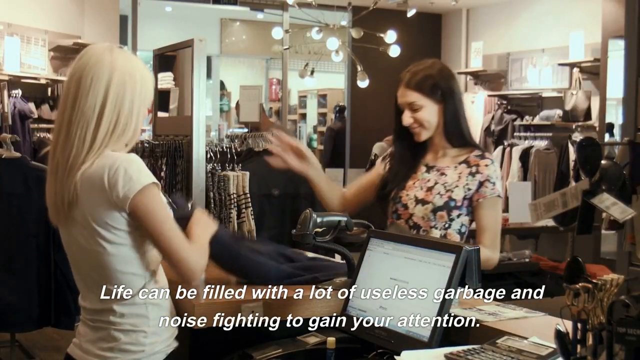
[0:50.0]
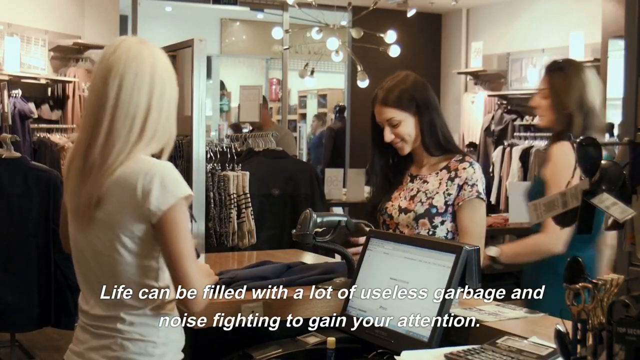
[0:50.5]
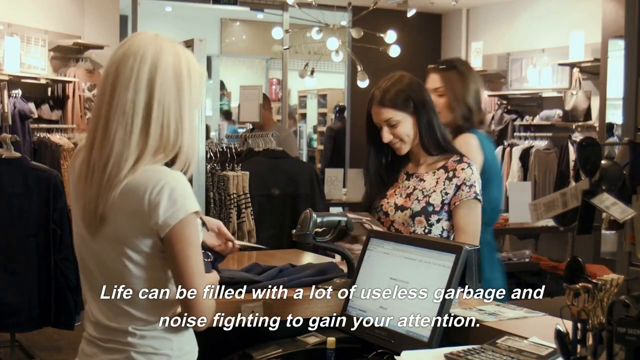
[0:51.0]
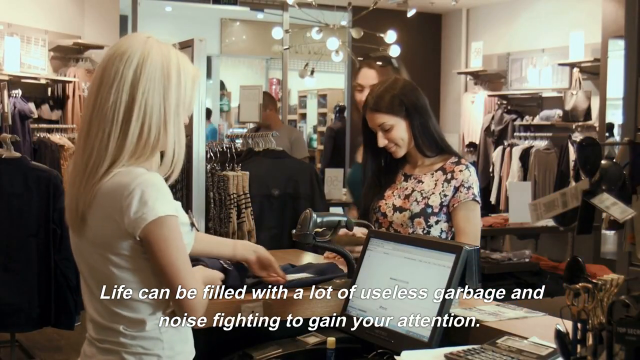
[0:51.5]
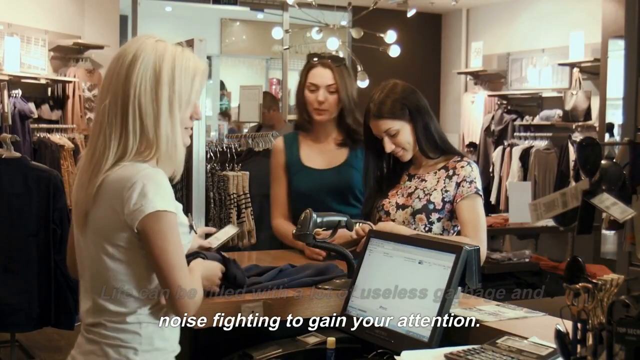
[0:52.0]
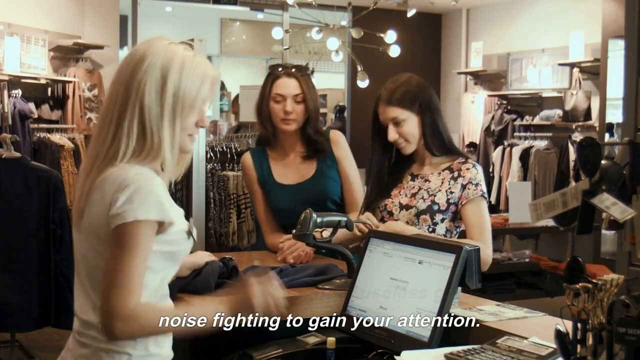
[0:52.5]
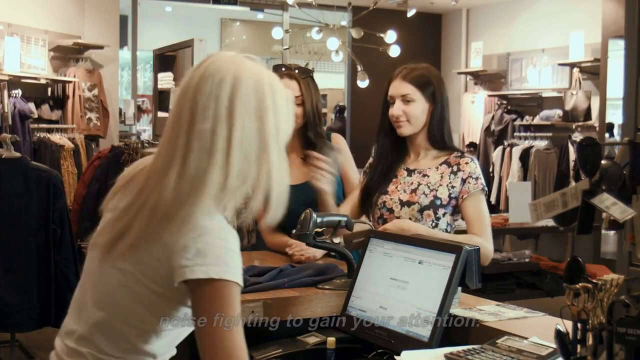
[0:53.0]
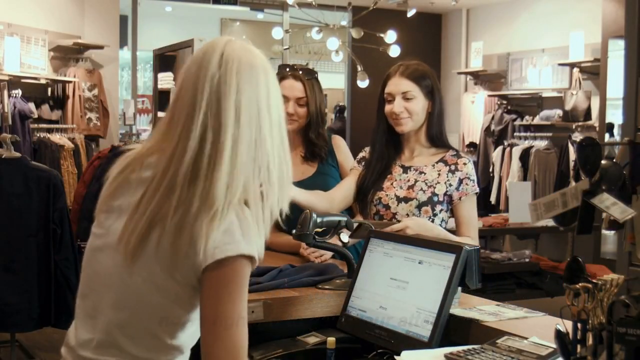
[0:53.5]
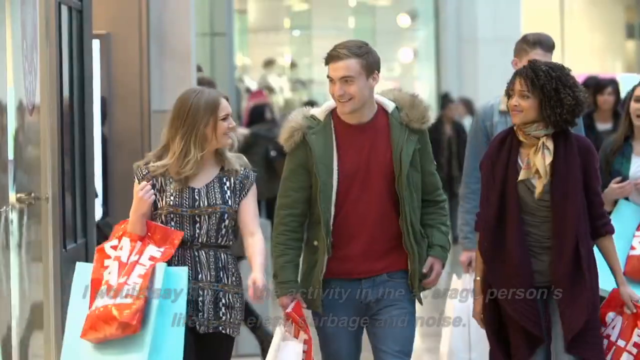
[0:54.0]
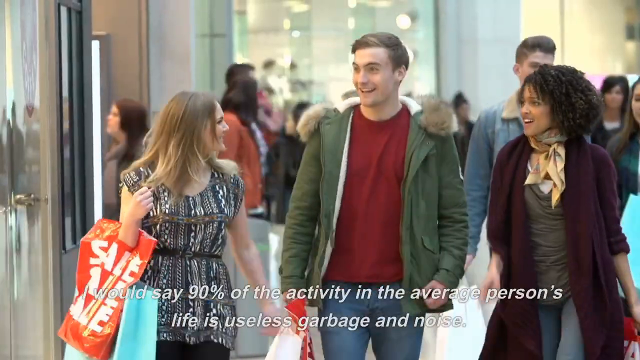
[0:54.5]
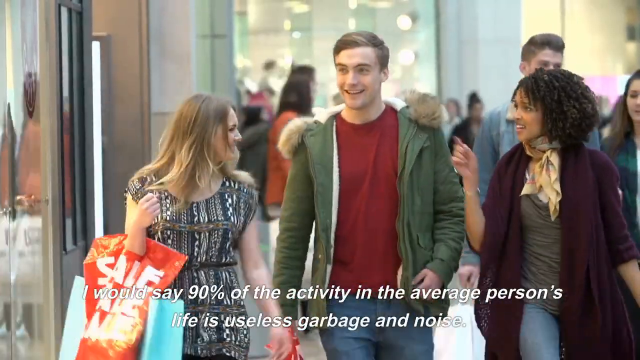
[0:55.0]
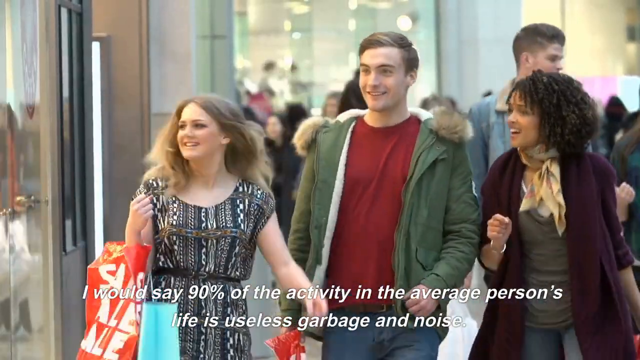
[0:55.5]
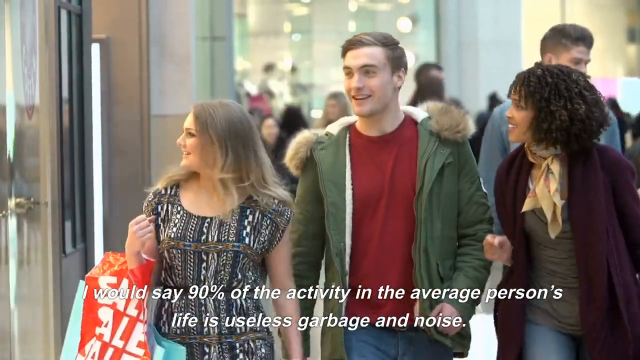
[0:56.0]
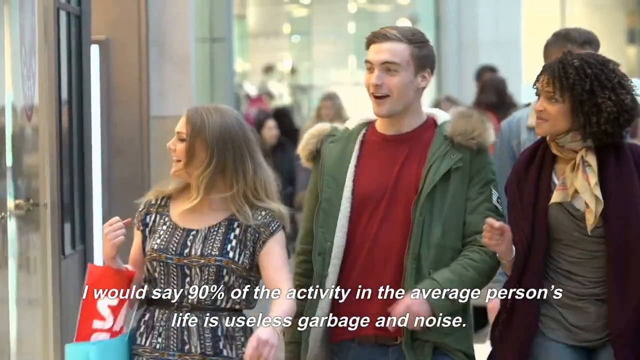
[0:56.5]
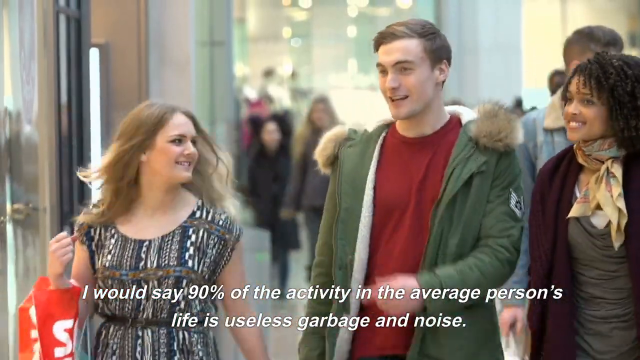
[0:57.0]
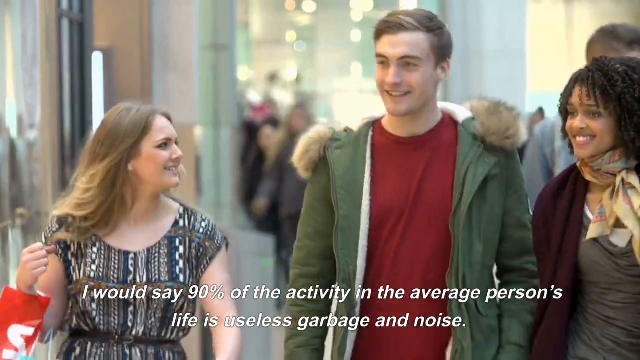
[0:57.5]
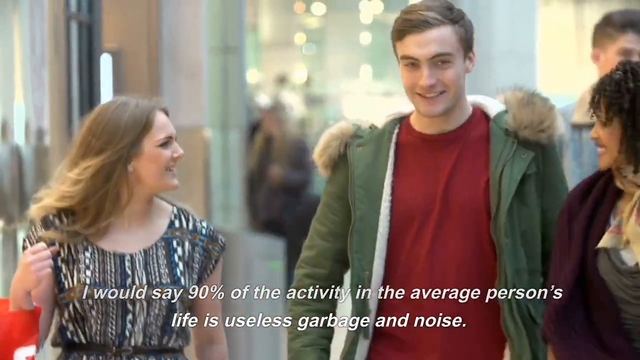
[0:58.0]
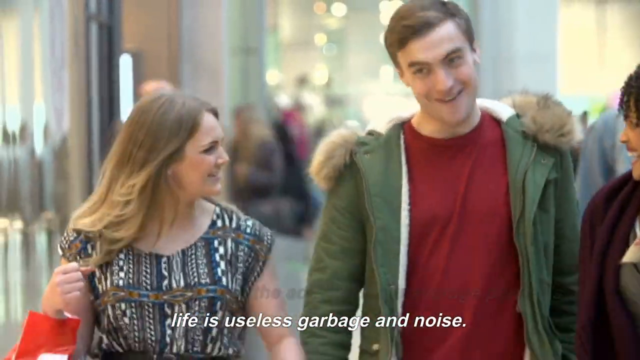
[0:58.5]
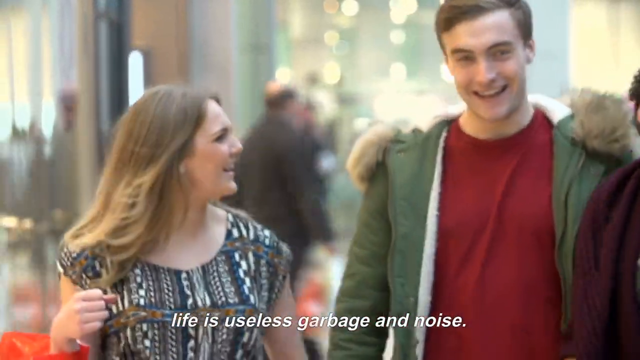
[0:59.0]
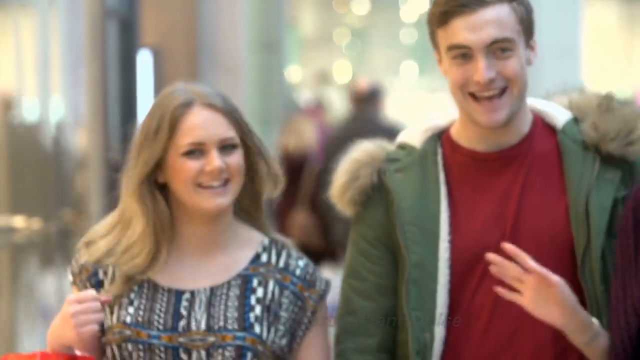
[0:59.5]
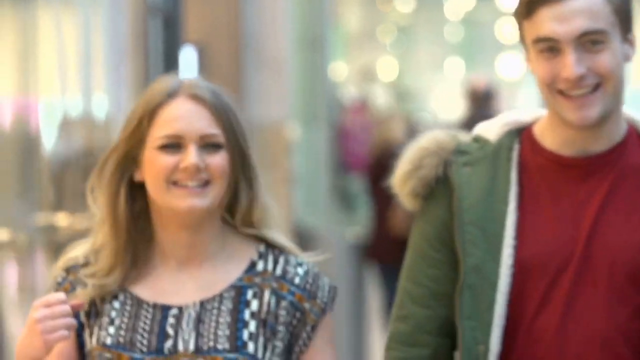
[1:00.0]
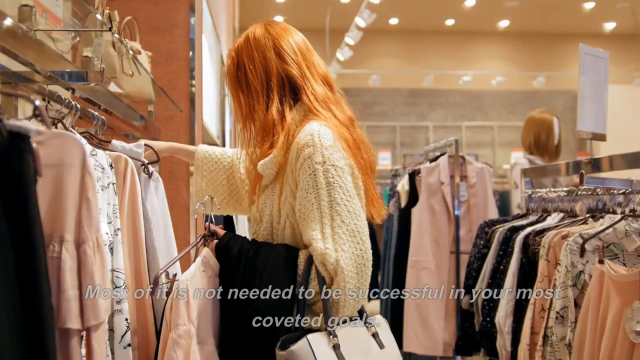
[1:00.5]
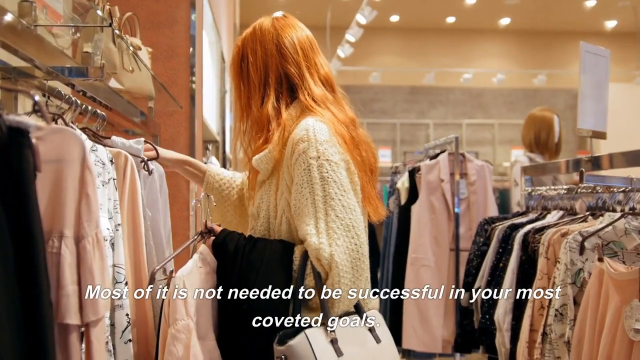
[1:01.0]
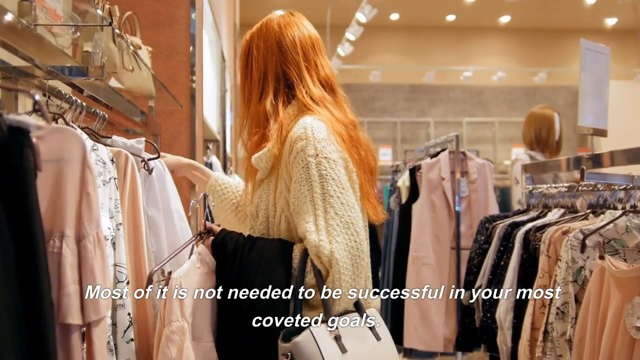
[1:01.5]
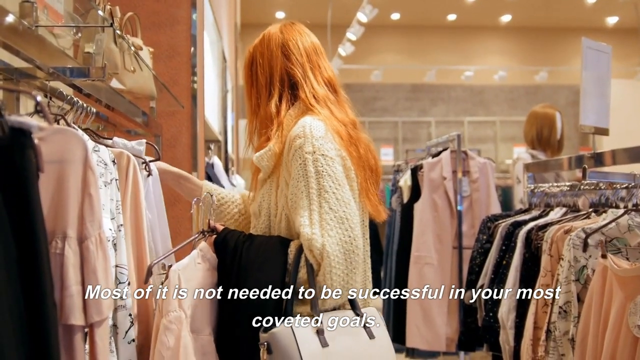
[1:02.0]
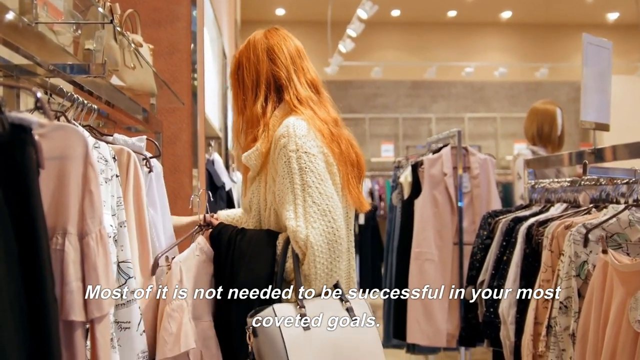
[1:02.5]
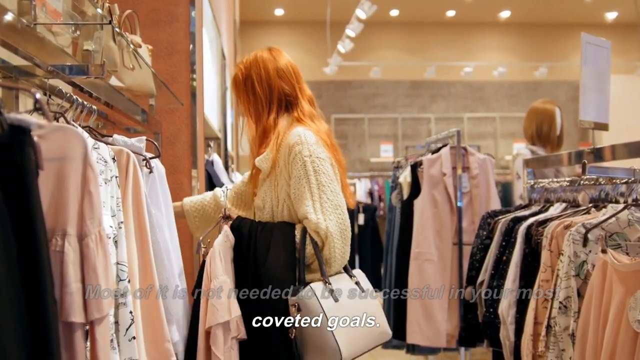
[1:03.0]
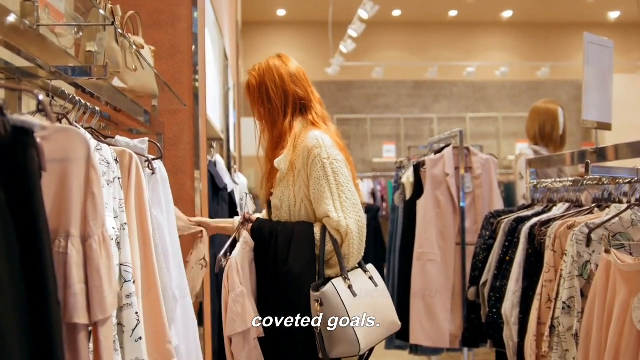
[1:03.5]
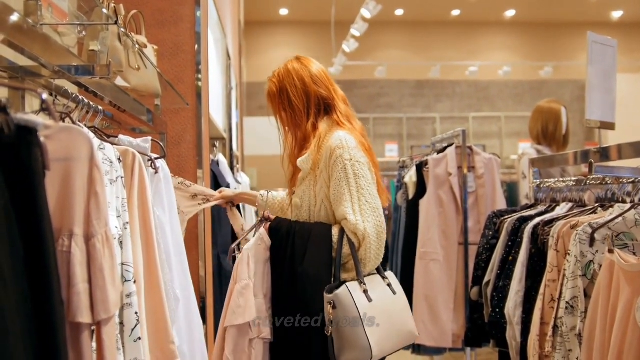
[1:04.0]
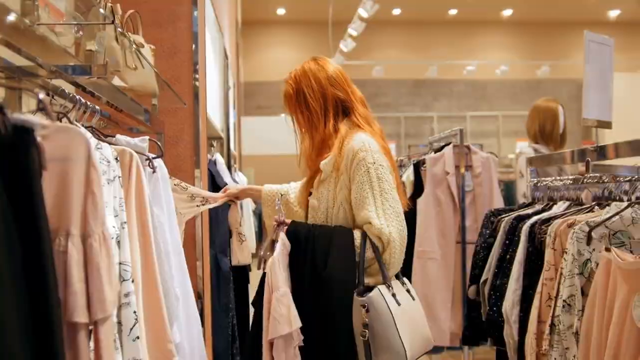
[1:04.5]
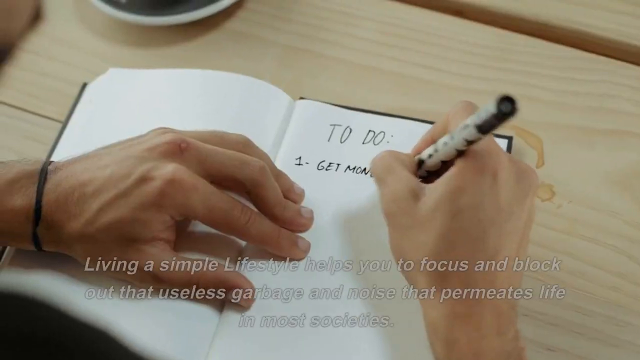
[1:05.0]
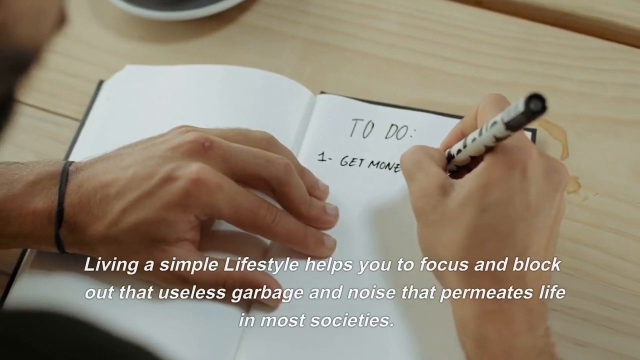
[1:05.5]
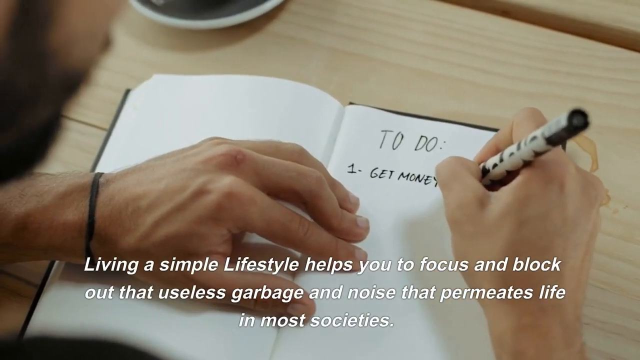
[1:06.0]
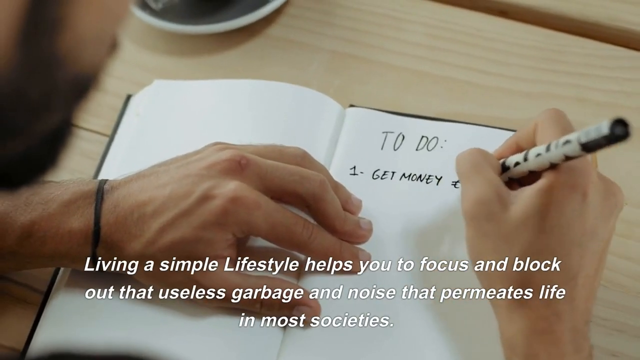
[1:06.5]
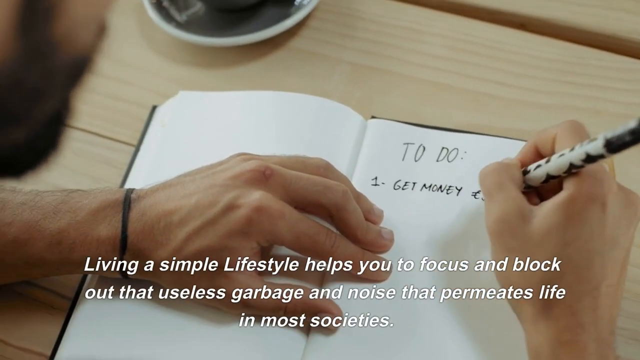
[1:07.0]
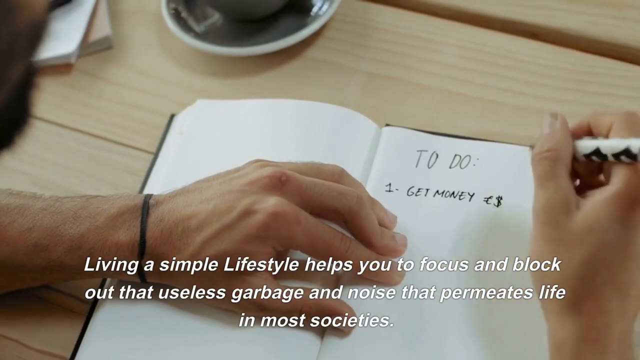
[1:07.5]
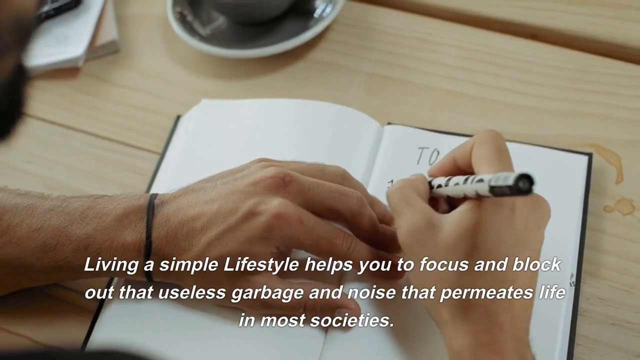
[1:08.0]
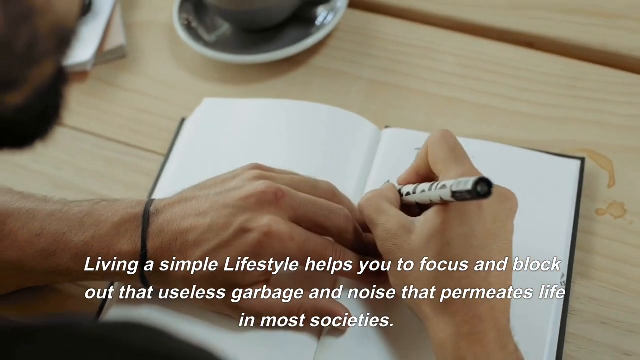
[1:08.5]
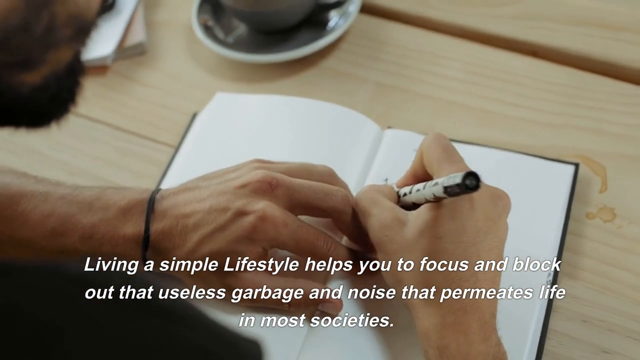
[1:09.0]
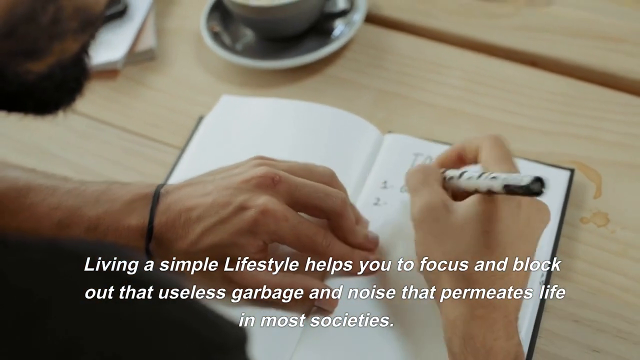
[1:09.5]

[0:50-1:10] The two women interacting in the shop are shown, and a third woman joins them. Outside in the shopping mall, three people are out and about: a fairly short woman in her 20s, a man with shortish hair wearing a green parka, and a very stylishly dressed African American woman. They look happy. The text reads: "I would say that 90% of the activity in the average person's life is useless garbage and noise." Back in the women's clothing shop, the text says most of it is not needed "to be successful in your most coveted goals." Then someone writes a to-do list in a notebook while the text reads: "living a simple lifestyle helps you to focus and block out that useless garbage and noise that permeates life in most societies." The person writing is male and has a black beard.